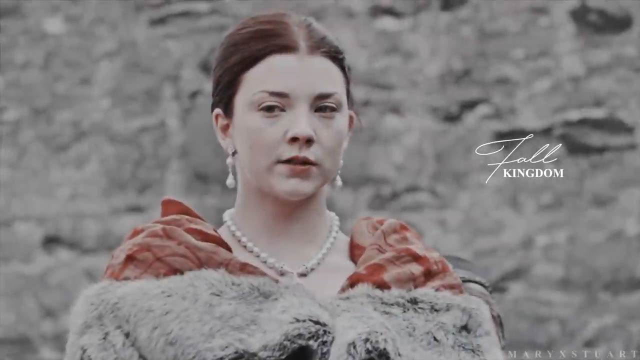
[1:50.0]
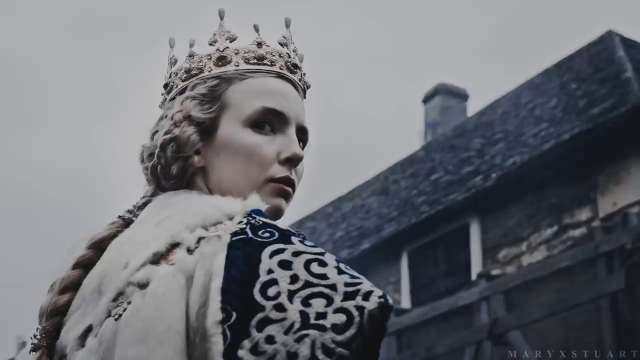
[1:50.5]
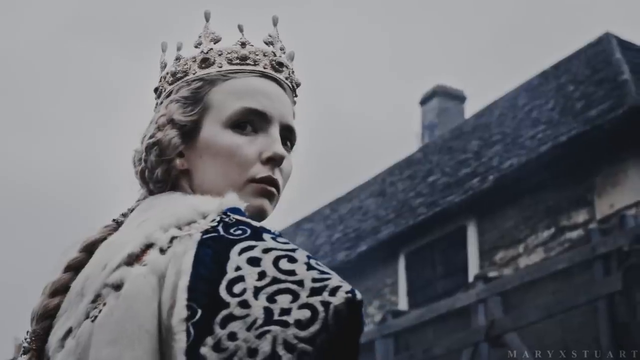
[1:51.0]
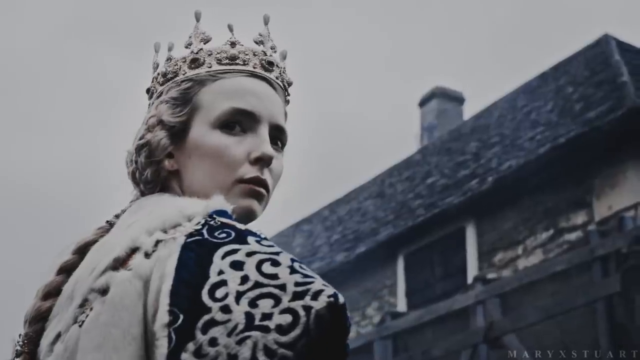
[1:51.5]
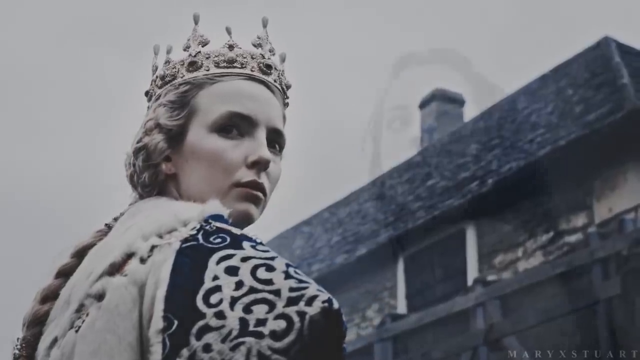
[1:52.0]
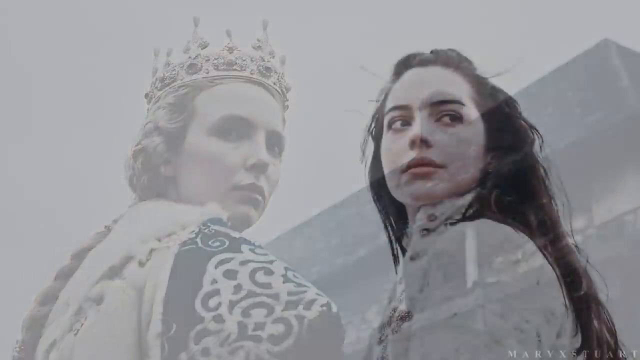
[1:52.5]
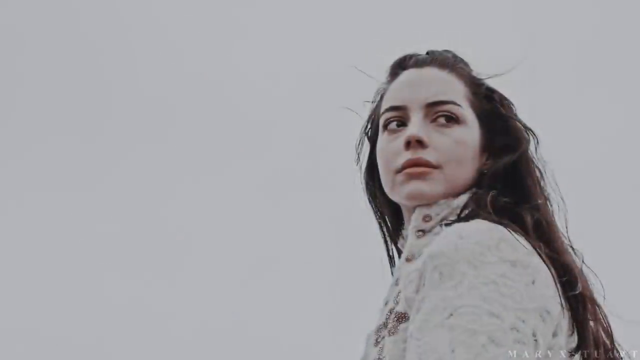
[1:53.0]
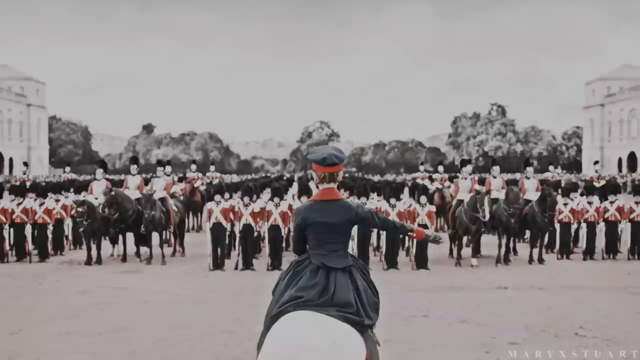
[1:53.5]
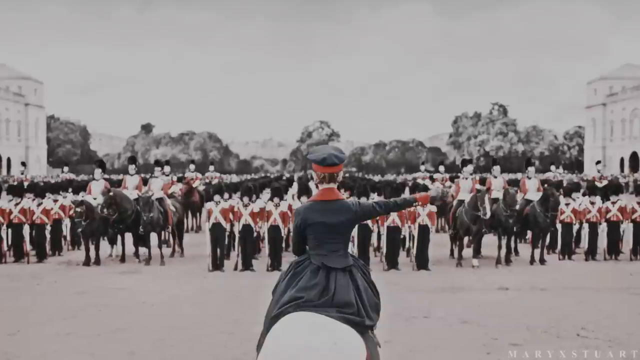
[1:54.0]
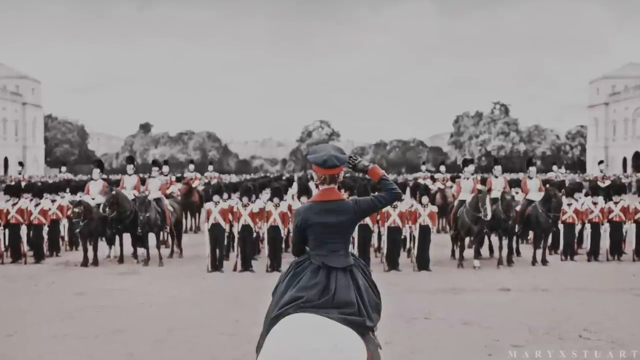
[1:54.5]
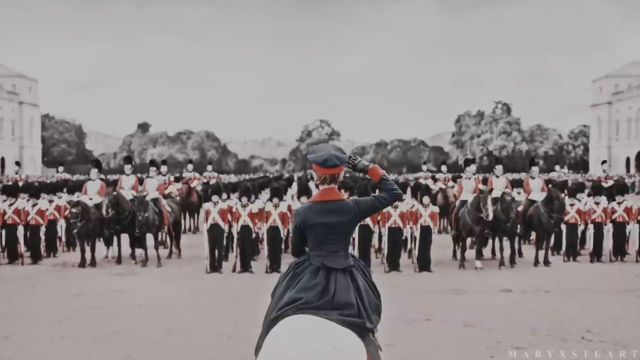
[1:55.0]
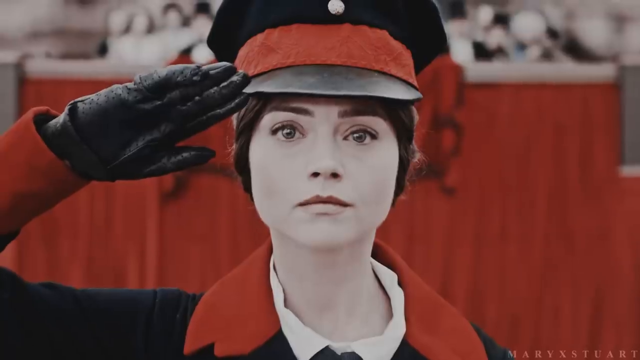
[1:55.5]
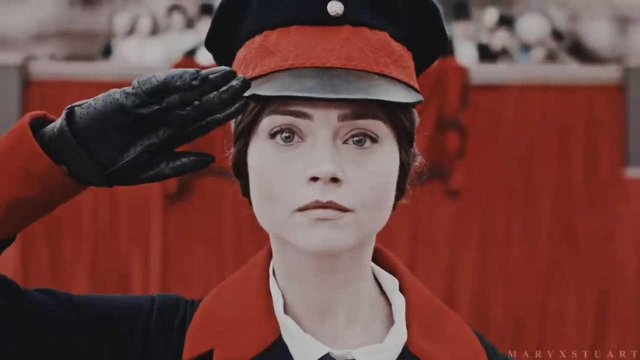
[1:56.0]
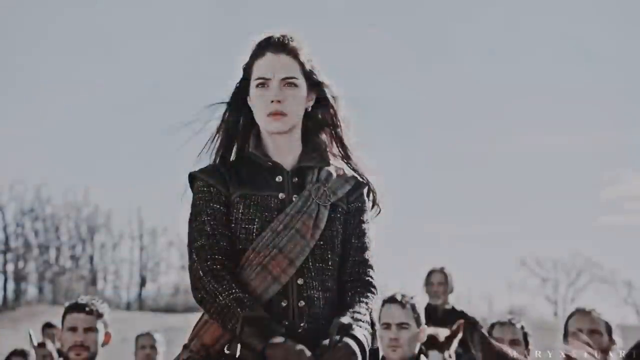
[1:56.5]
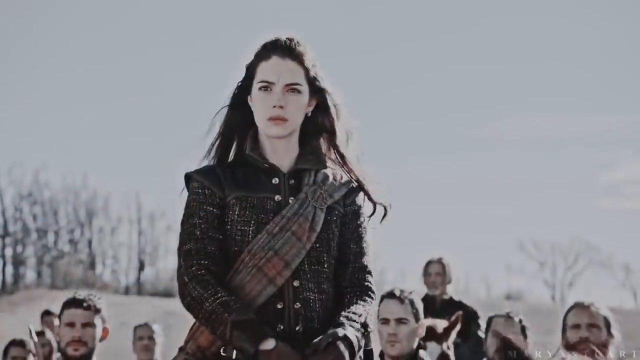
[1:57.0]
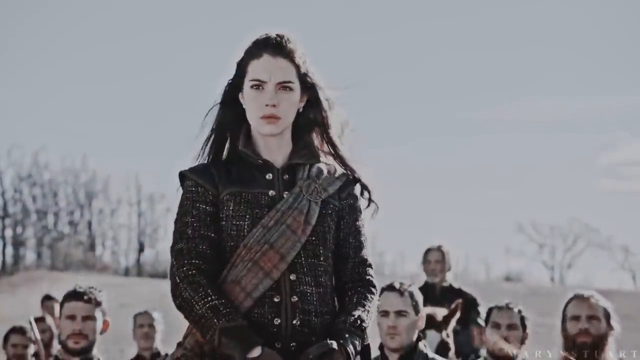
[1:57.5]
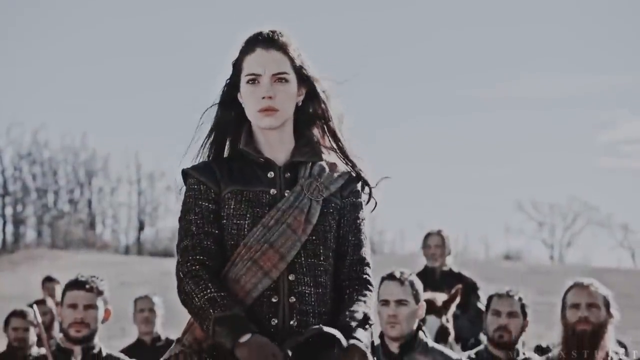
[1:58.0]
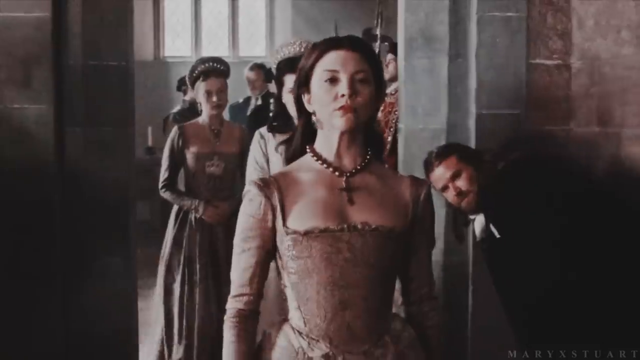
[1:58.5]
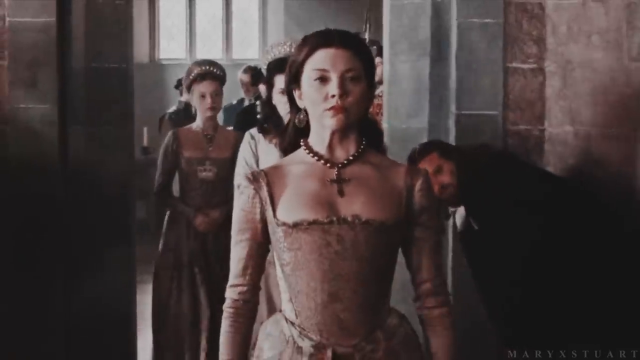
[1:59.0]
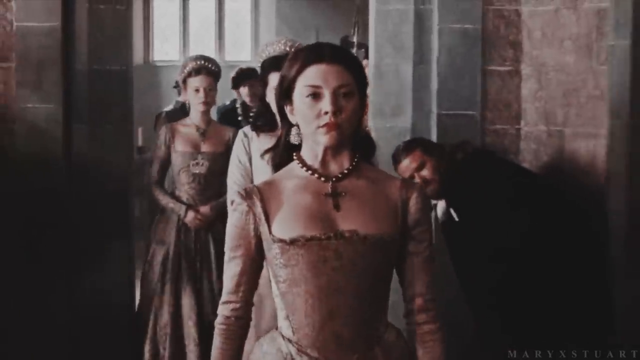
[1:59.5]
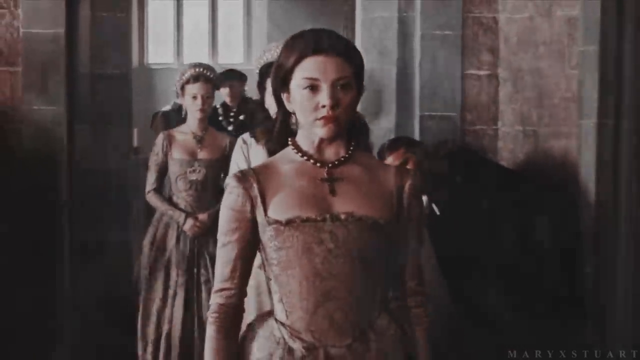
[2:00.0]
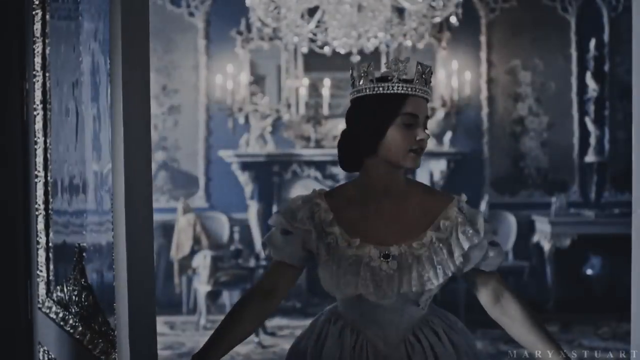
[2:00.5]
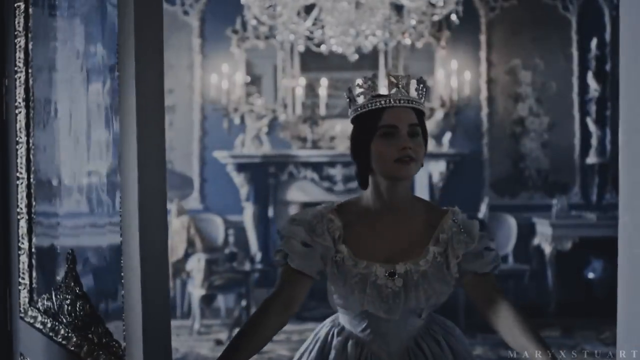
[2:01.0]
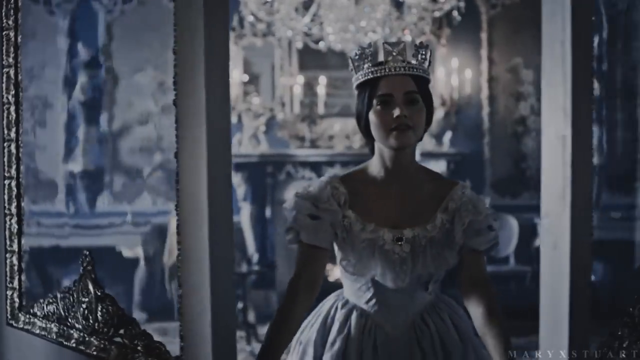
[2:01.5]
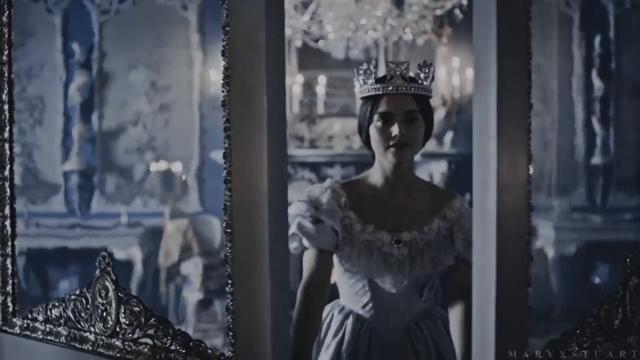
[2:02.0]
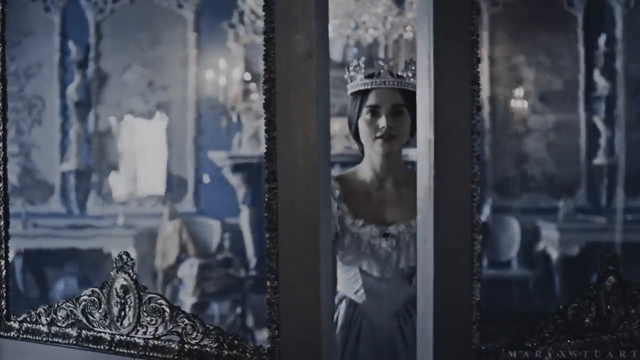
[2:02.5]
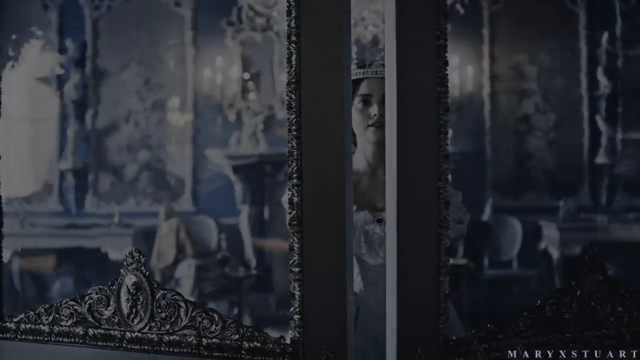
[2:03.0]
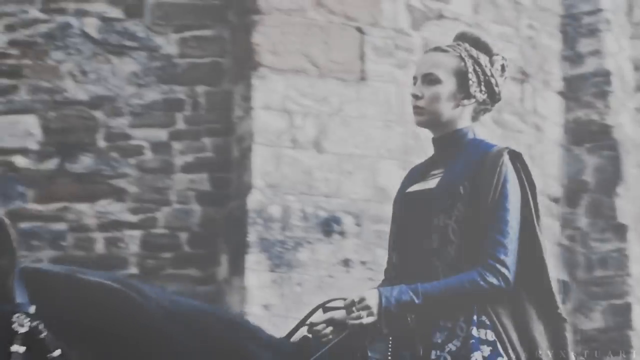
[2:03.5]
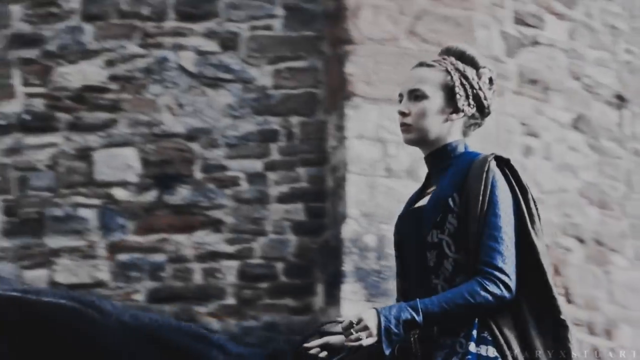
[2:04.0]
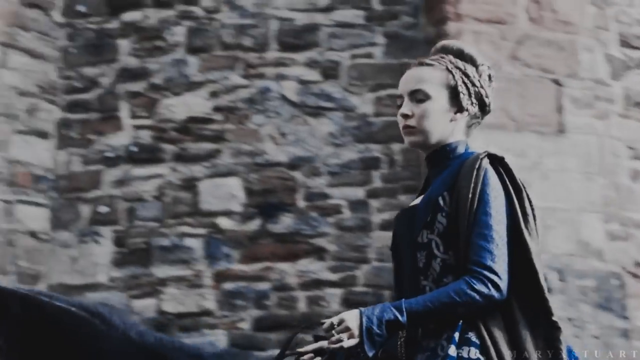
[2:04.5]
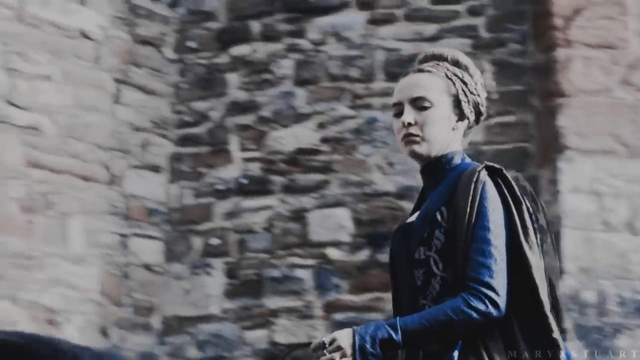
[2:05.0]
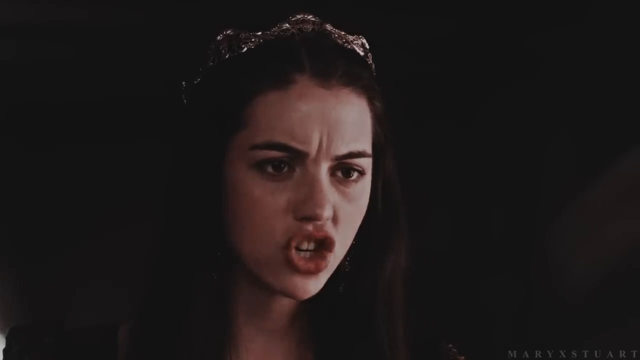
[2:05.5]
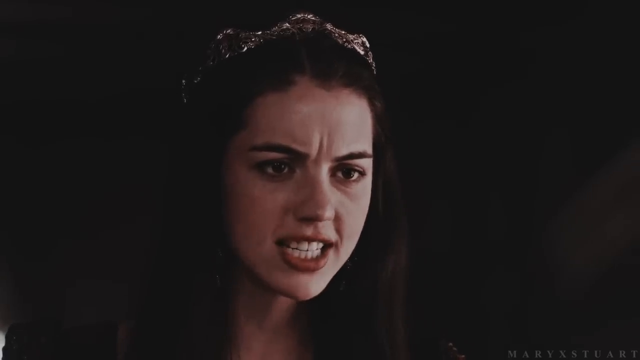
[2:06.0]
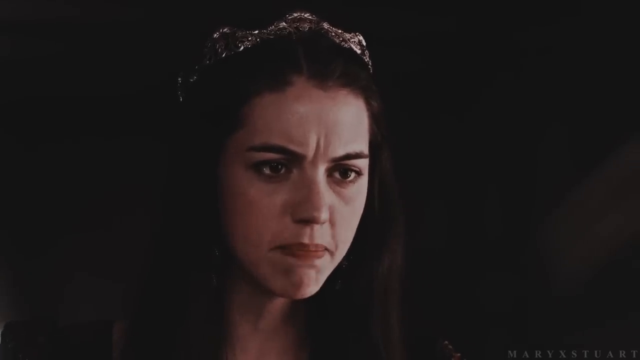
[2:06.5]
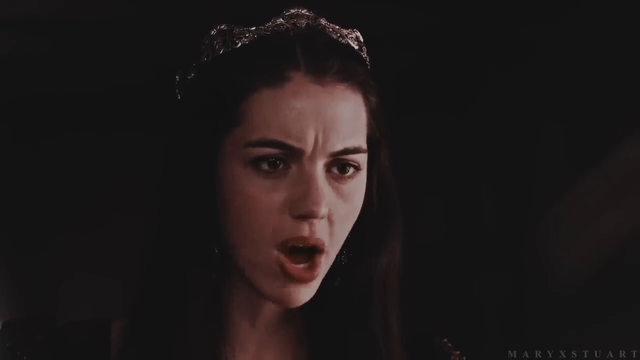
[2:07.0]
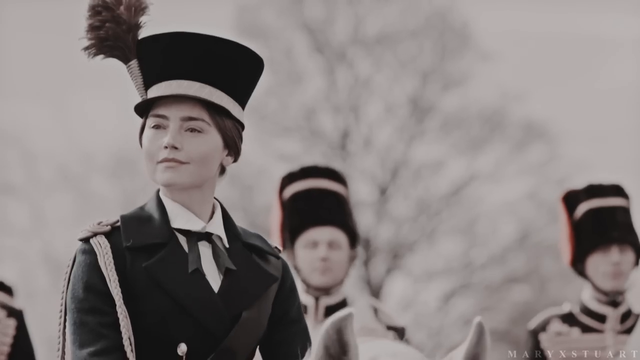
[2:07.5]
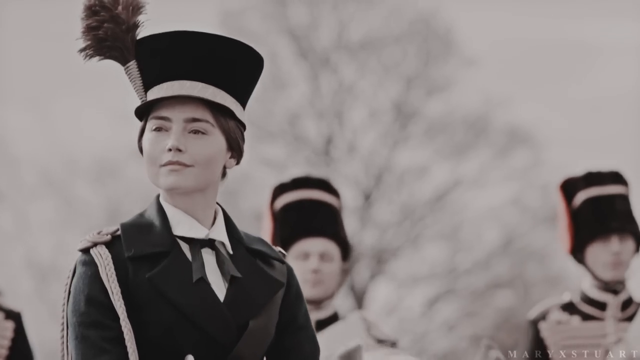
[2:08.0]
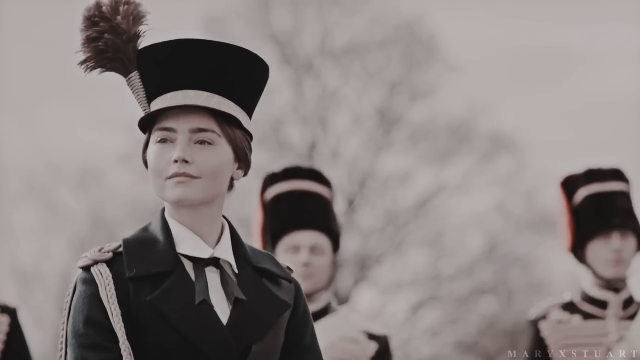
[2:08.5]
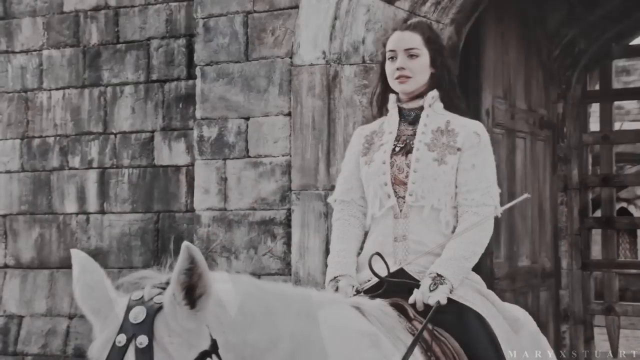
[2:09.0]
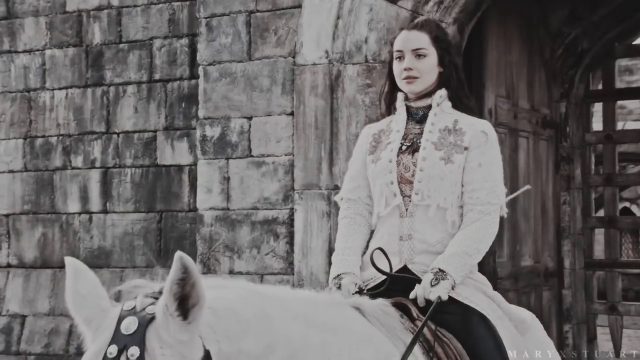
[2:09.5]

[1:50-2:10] In the center of the wide-format frame is a young woman, probably around 18 to 20, with reddish-brown hair parted in the middle and pulled back. She wears pearl earrings and a pearl necklace, and she is white. She has on kind of a frilly garment with red frills around her shoulders and kind of a horizontal line of fur across the top of her chest, which is at the bottom of the frame. The video then cuts to a view looking up from about the height of a little kid, maybe about three feet up, at the rear right of a woman right in front of the camera; her shoulder and back are on the left side. Her body faces the upper right, then her head turns to the right as if she is looking right over the viewer's shoulder. She has long, braided blonde hair in the back and a big crown on her head. Another shot shows a woman on the right whose body faces left while she looks over her shoulder, her head turned toward the camera but her gaze going past it to the left, with her eyes in the left corners.